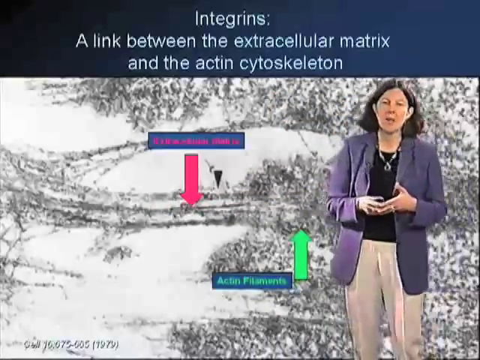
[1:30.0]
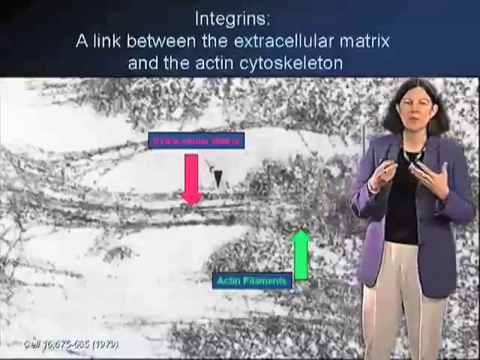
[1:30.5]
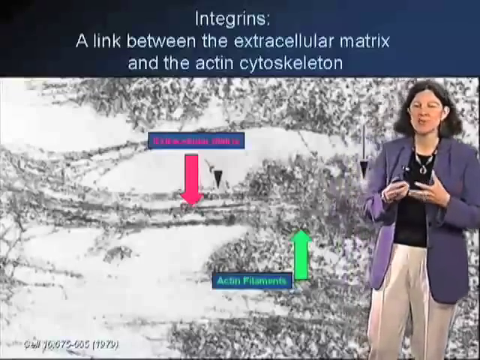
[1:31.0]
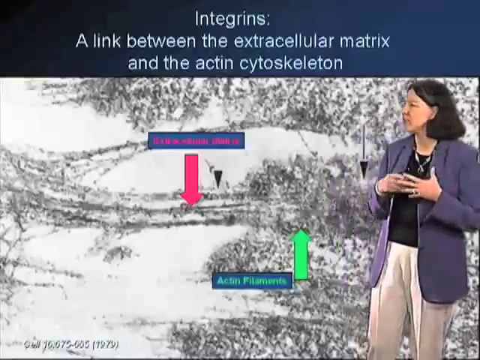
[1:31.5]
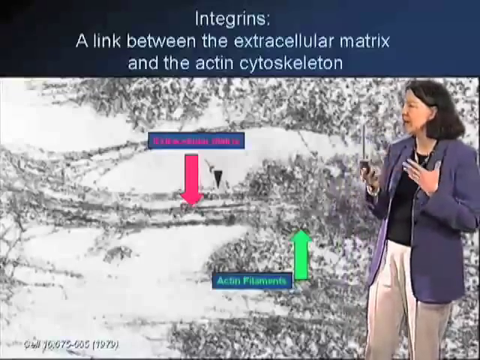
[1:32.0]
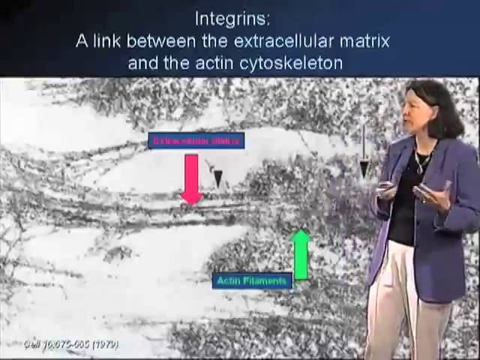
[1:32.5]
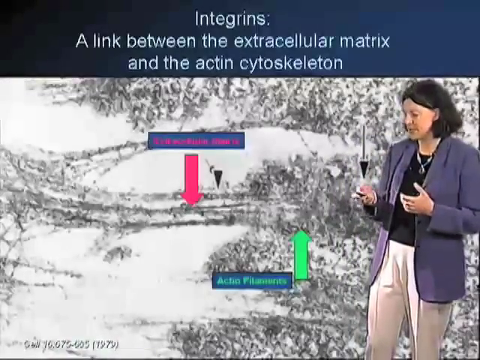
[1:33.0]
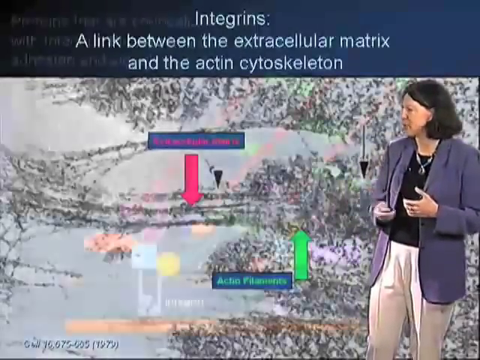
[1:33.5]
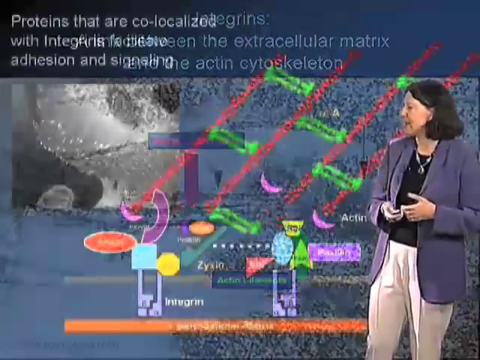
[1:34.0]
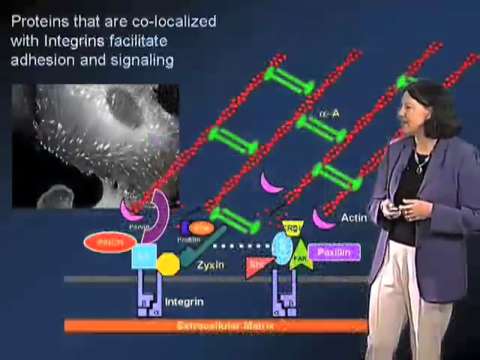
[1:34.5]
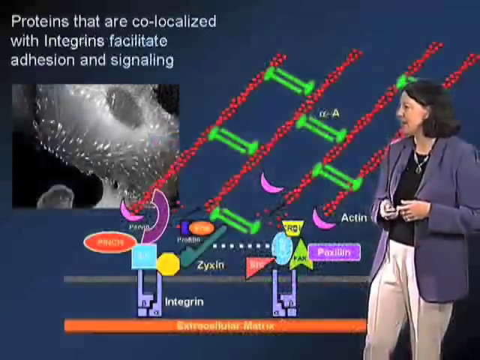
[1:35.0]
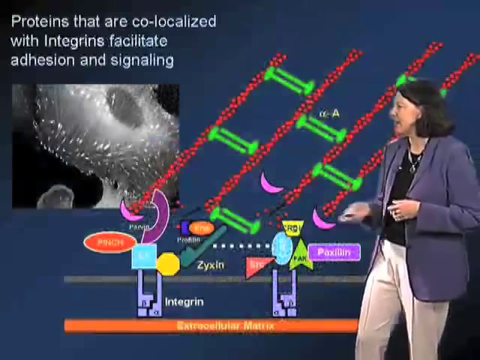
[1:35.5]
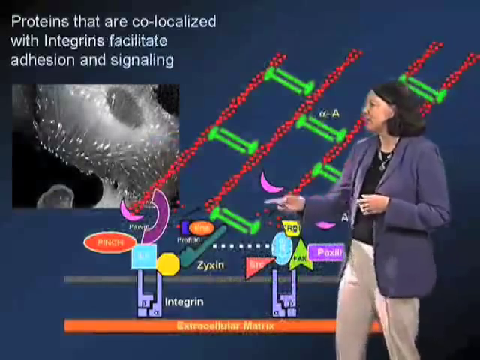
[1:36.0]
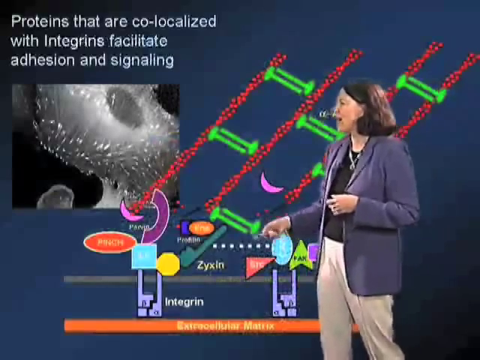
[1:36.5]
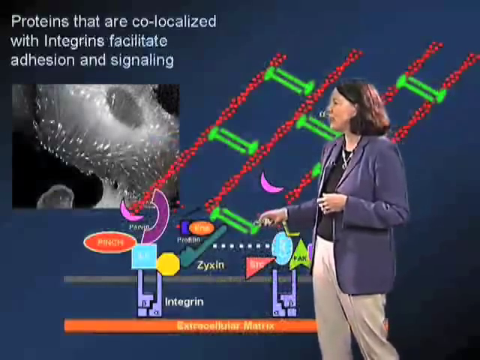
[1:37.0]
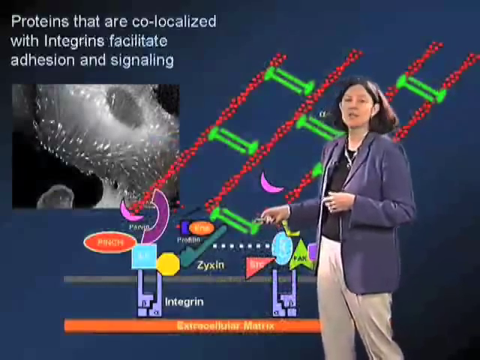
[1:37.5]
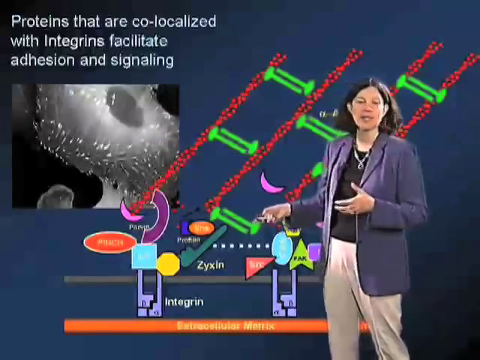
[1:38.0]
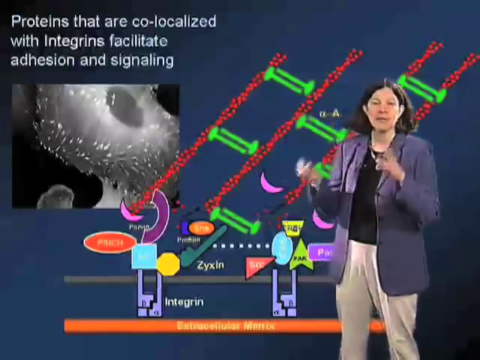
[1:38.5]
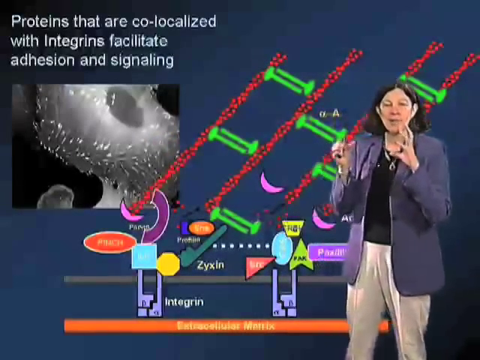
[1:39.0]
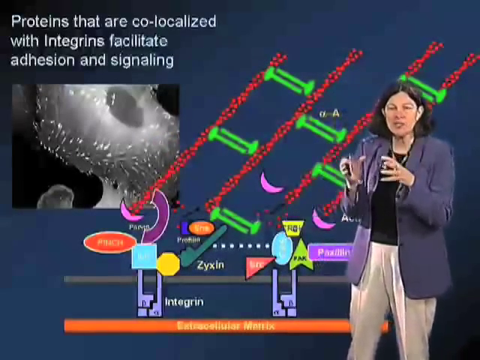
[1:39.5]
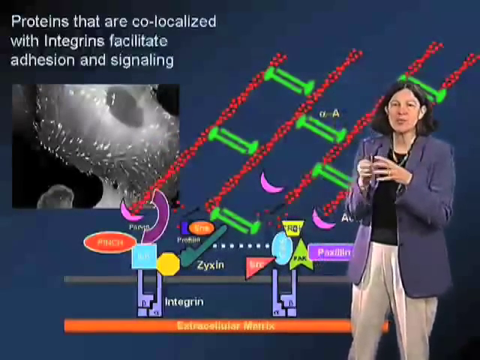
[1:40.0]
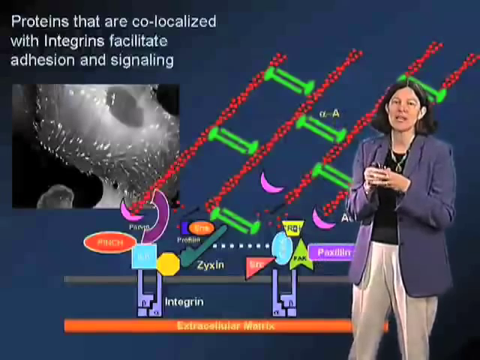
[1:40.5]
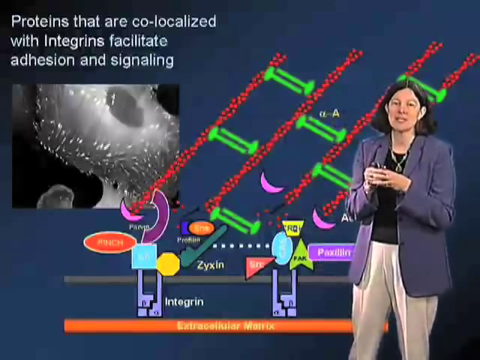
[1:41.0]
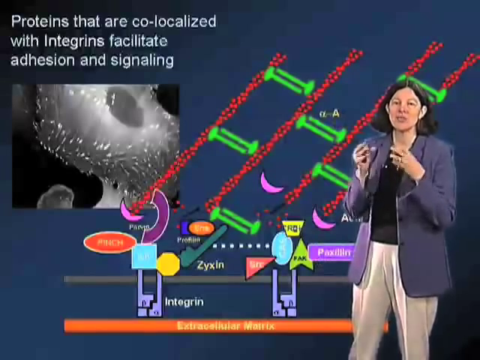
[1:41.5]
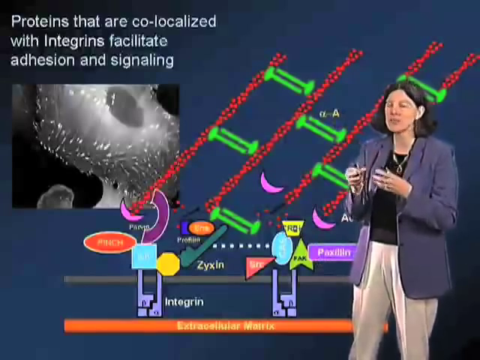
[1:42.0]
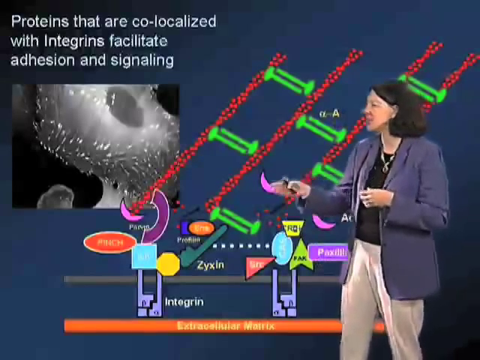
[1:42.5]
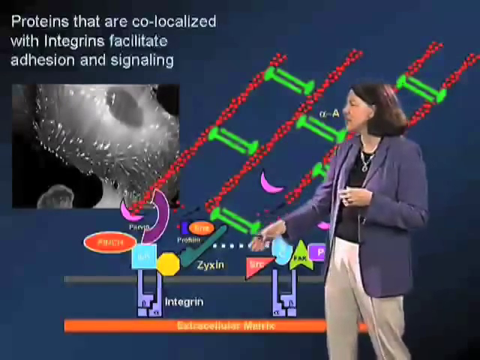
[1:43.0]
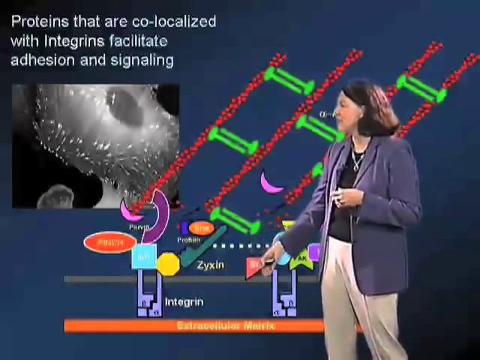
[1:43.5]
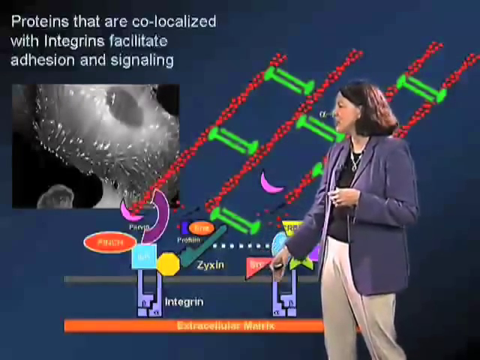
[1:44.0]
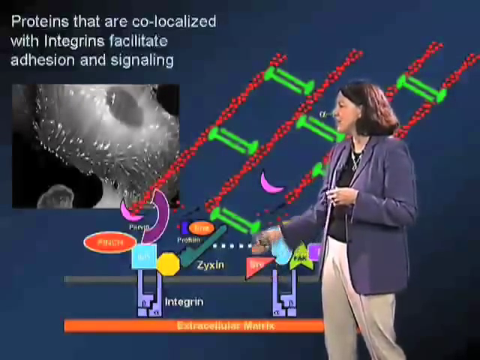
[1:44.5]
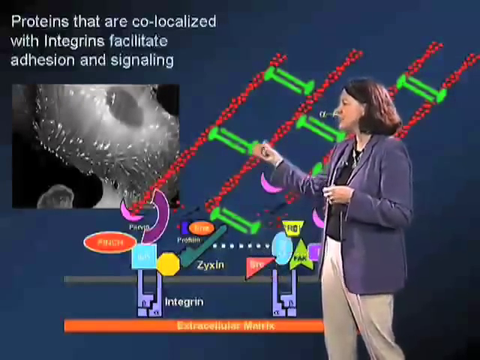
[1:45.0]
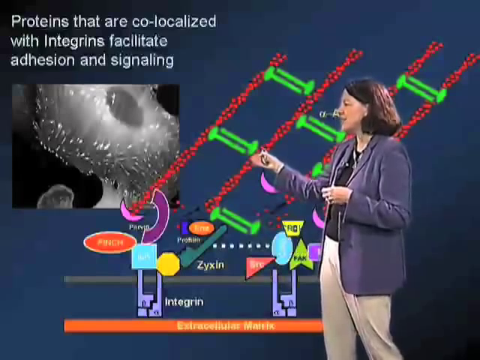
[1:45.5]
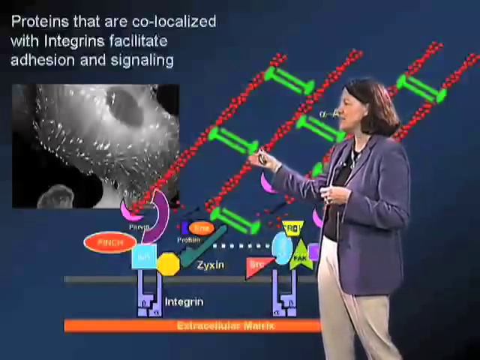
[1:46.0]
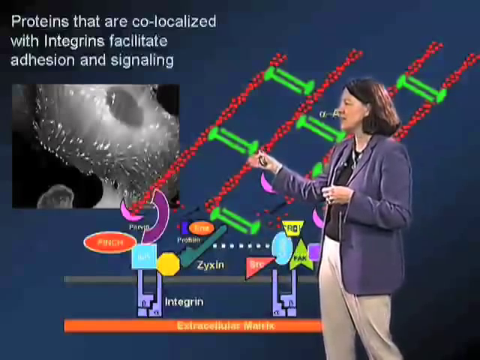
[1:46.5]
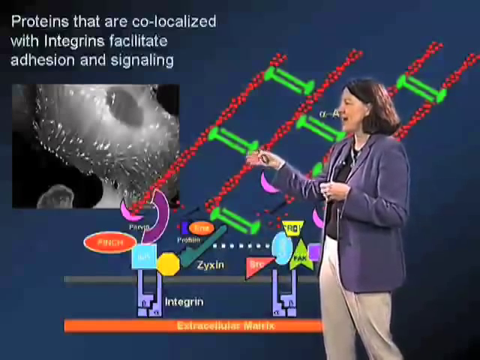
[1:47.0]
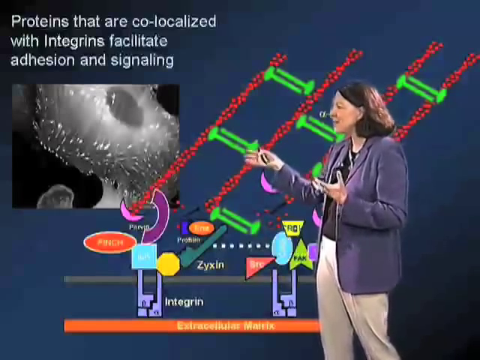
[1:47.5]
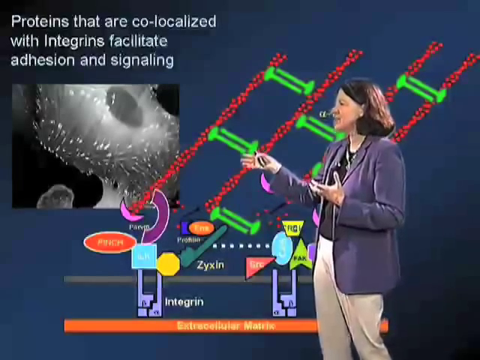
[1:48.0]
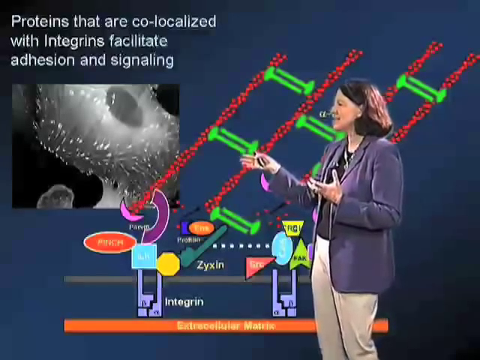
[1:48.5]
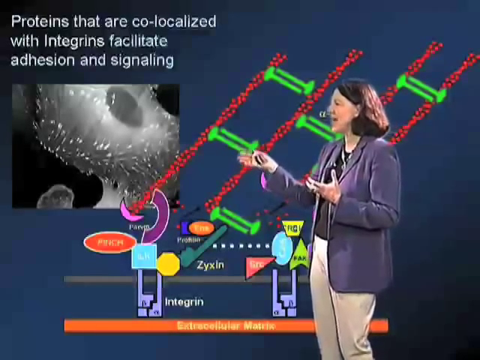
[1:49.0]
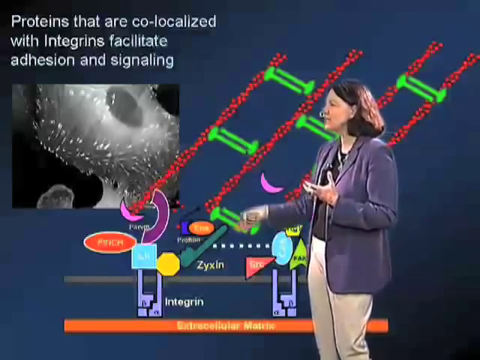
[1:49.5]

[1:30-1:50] A woman faces the camera and speaks toward it. In the background is a presentation with the title "Integrins" and a description of the link they provide, in white text over a blue background. Most of the screen is taken up by a diagram that uses pink and green arrows and labels to point to various functions. The woman uses her hands for emphasis, then looks down at the clicker in her right hand and presses it, changing the background screen entirely. It now shows a description about proteins that are co-localized with integrins, with diagrams using a variety of colors, shapes and labels. The woman points to them with her hand, emphasizing her points, and talks toward the screen or the camera the entire time.